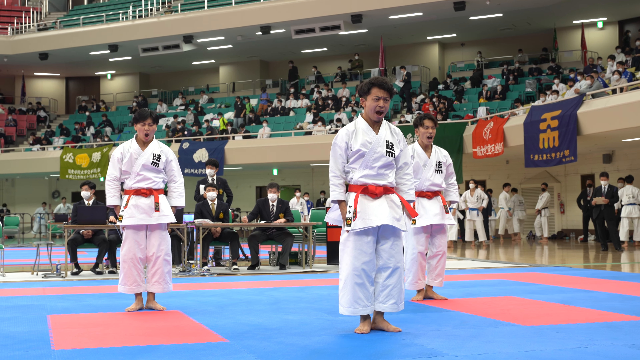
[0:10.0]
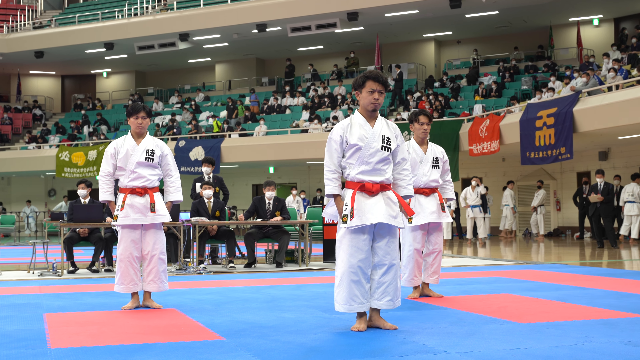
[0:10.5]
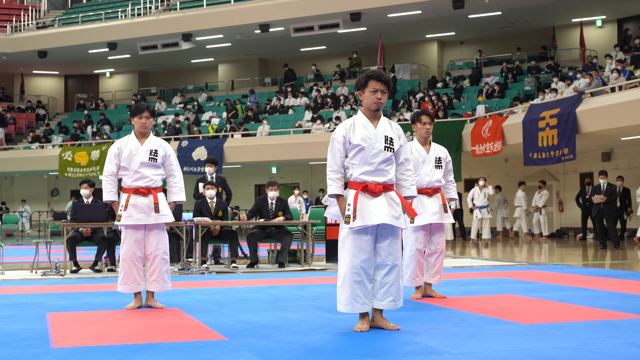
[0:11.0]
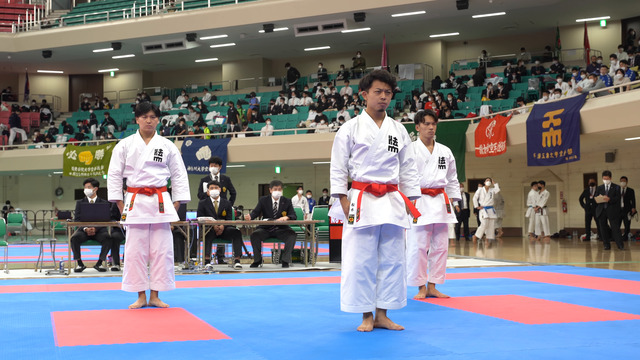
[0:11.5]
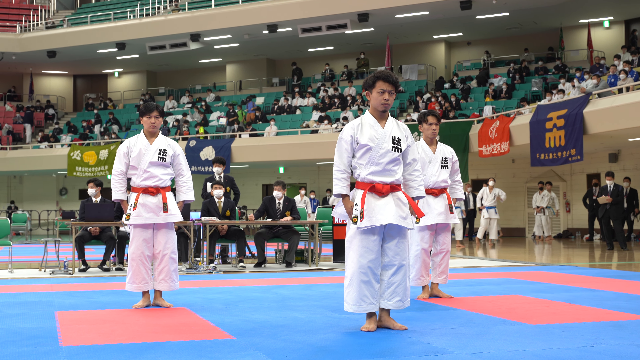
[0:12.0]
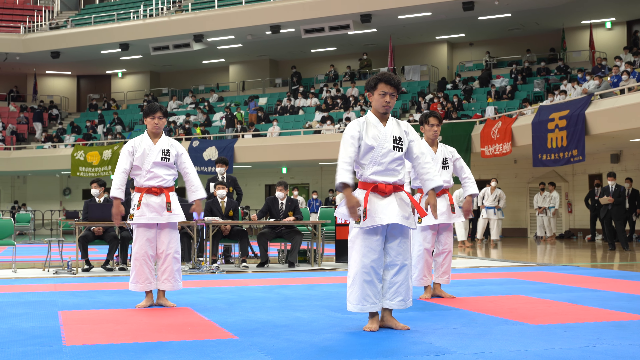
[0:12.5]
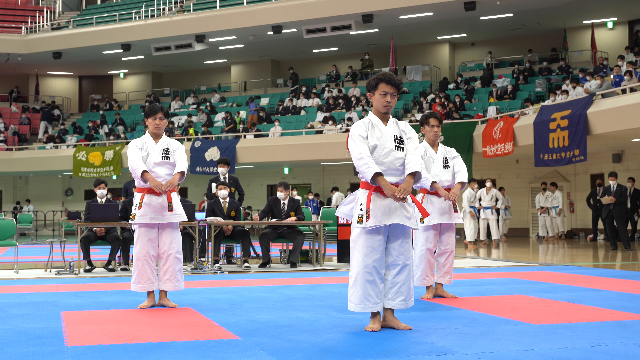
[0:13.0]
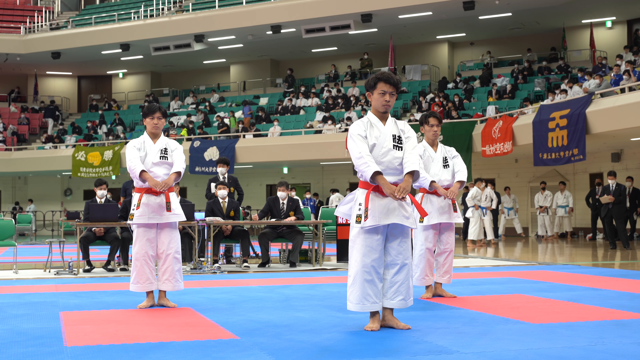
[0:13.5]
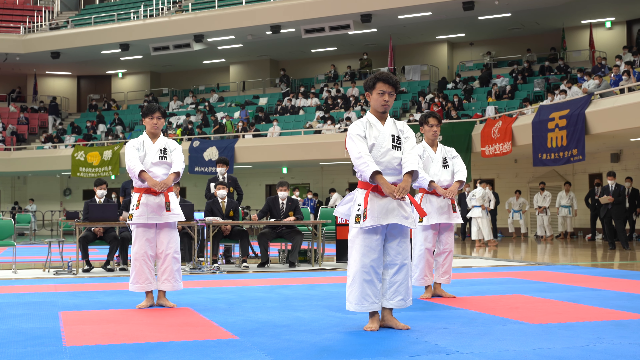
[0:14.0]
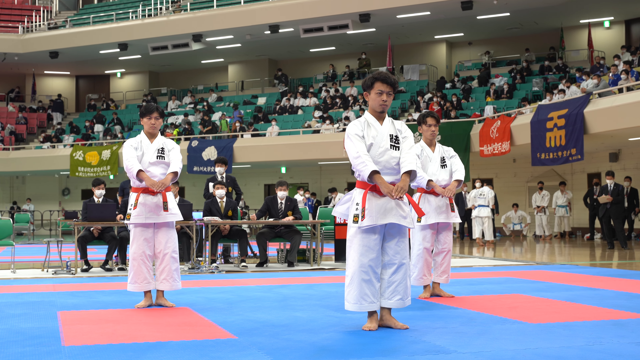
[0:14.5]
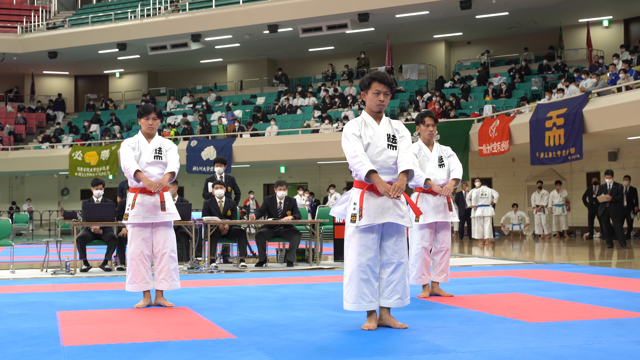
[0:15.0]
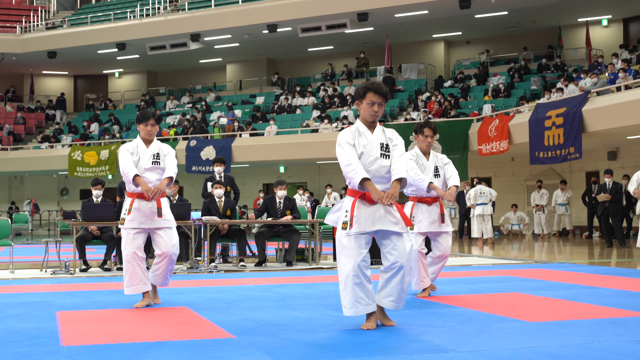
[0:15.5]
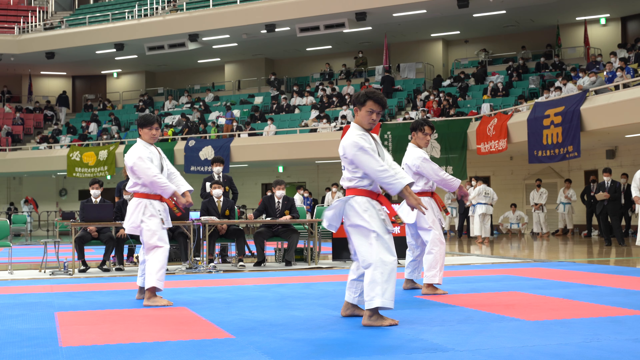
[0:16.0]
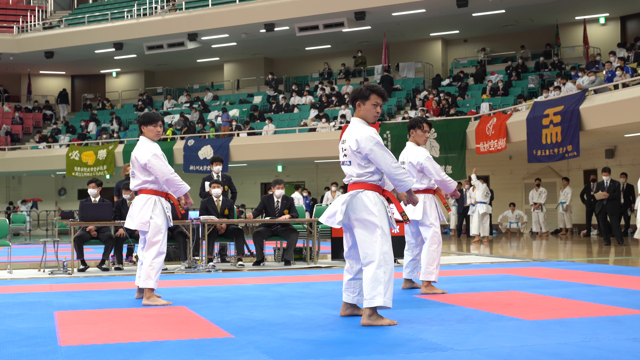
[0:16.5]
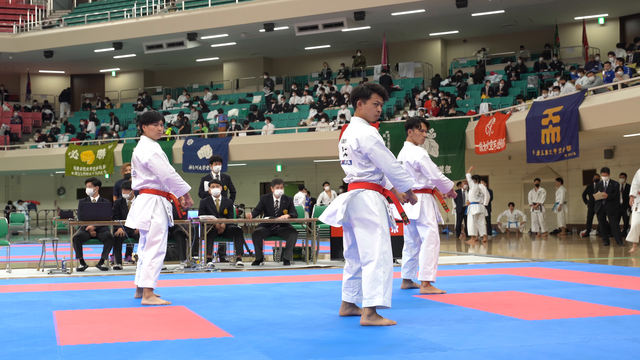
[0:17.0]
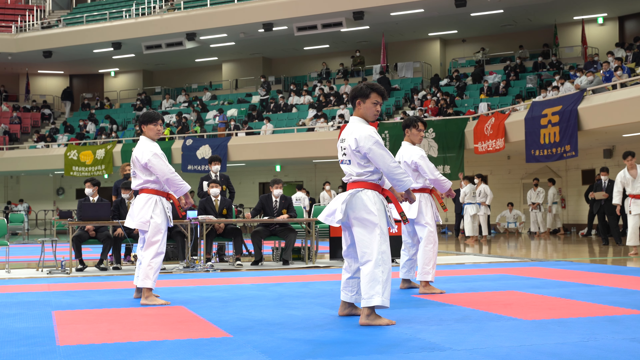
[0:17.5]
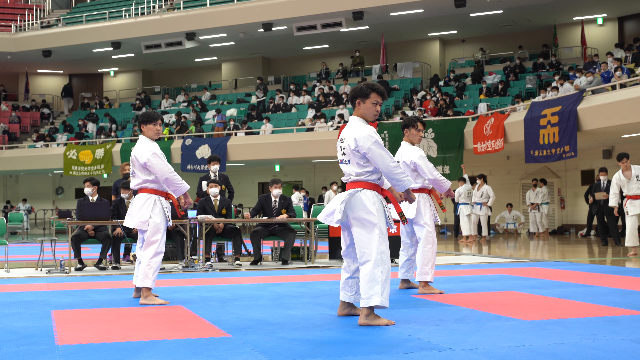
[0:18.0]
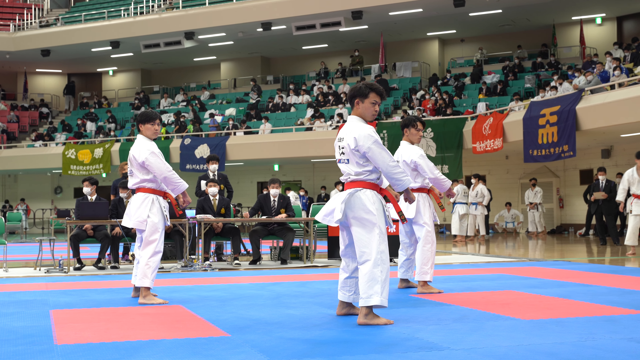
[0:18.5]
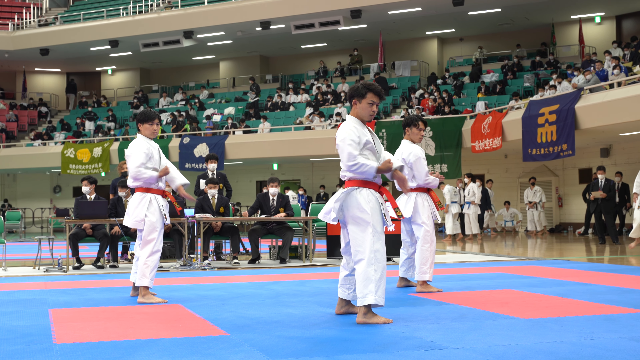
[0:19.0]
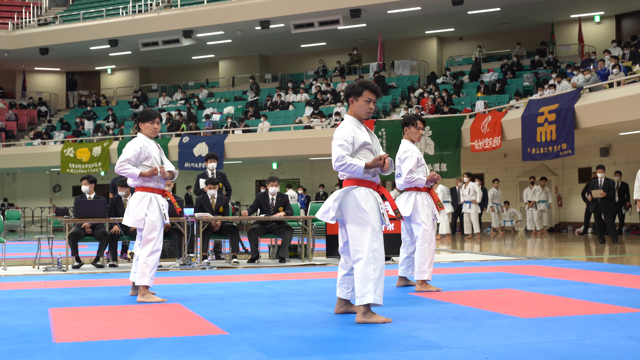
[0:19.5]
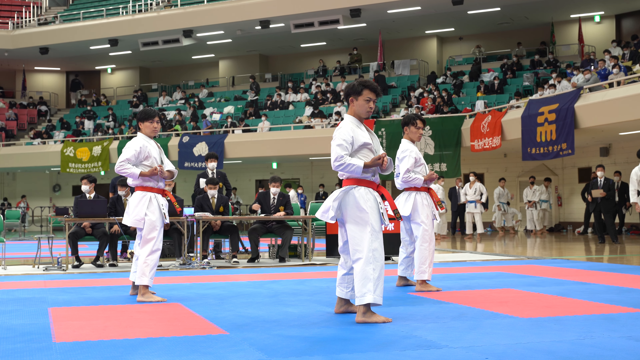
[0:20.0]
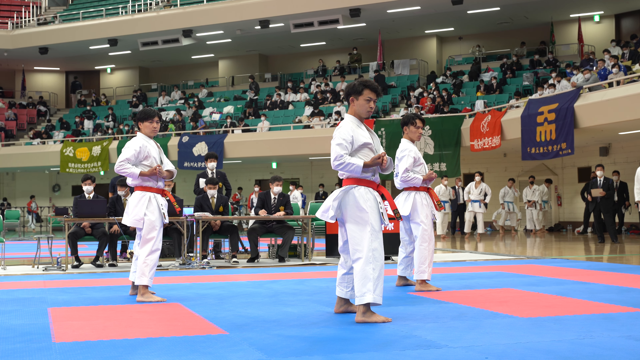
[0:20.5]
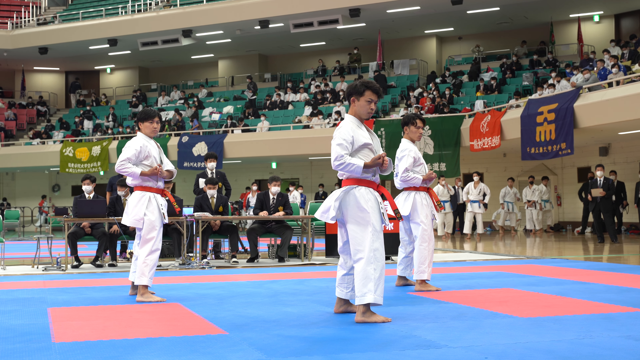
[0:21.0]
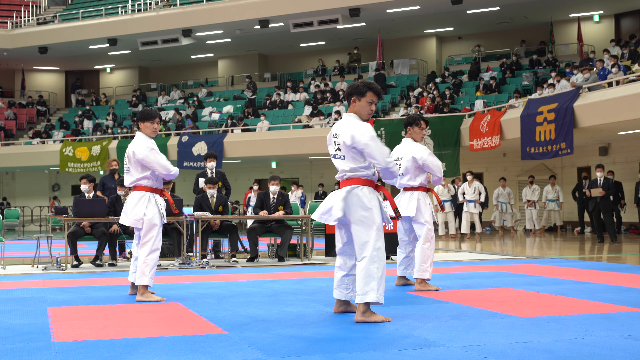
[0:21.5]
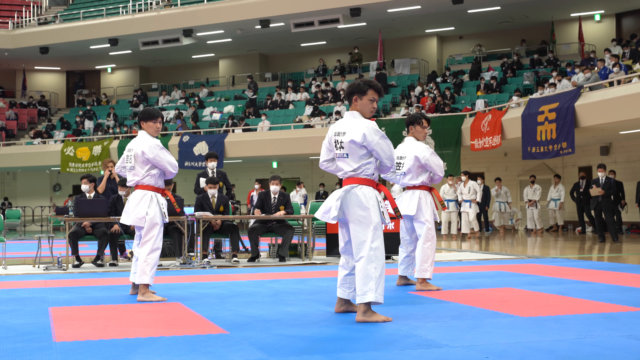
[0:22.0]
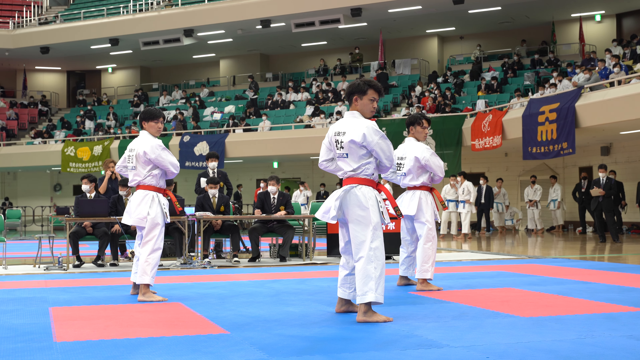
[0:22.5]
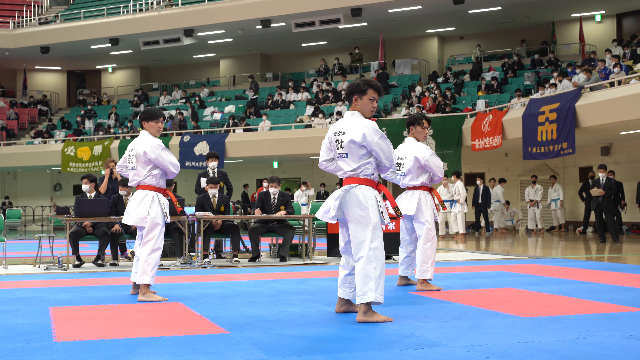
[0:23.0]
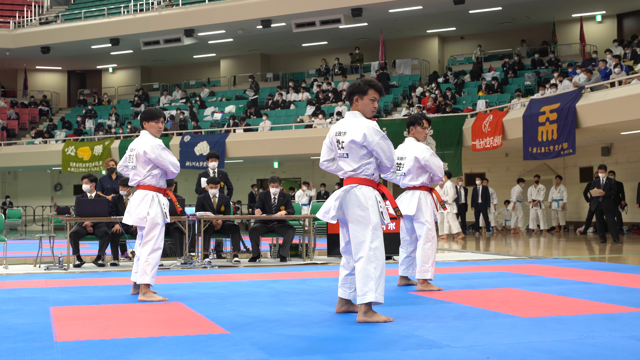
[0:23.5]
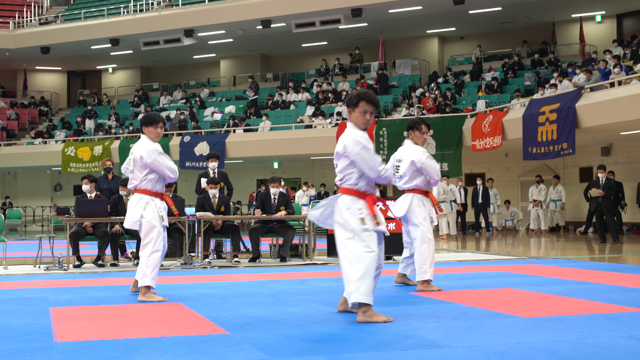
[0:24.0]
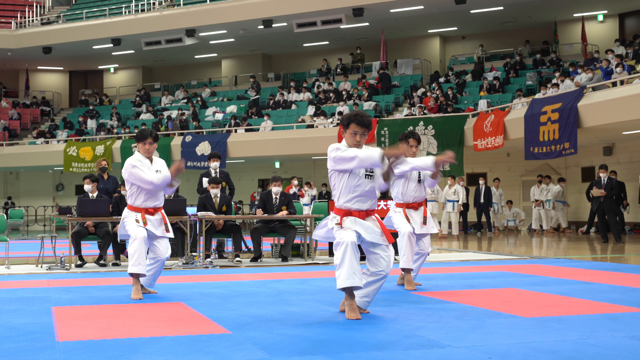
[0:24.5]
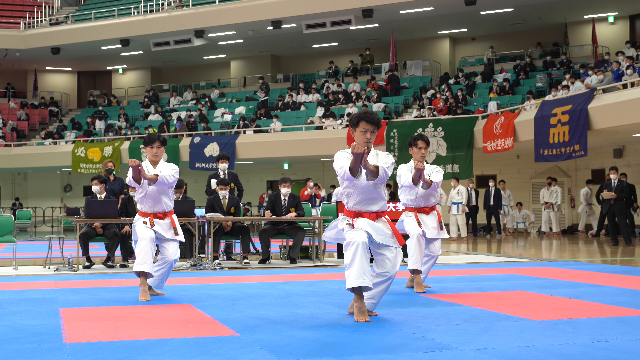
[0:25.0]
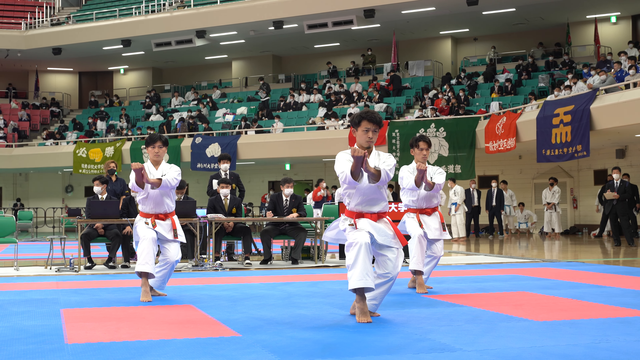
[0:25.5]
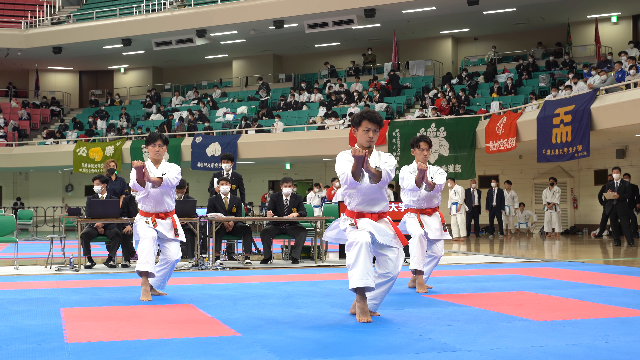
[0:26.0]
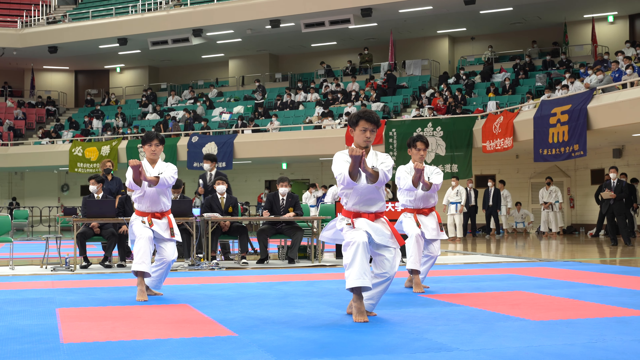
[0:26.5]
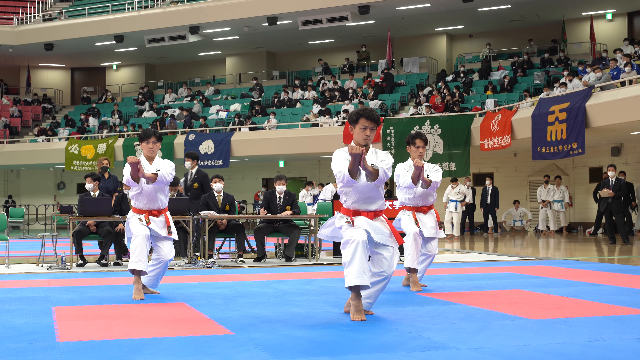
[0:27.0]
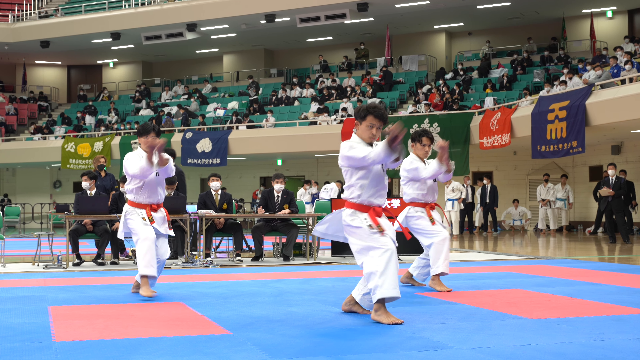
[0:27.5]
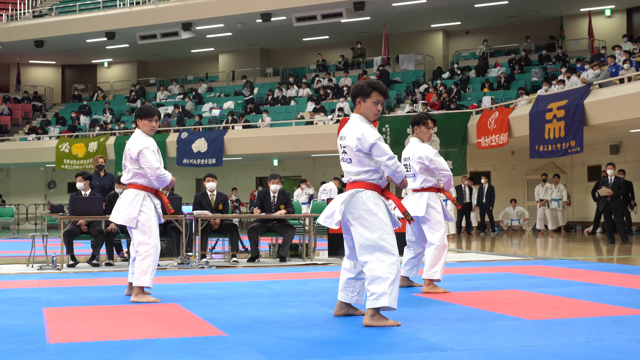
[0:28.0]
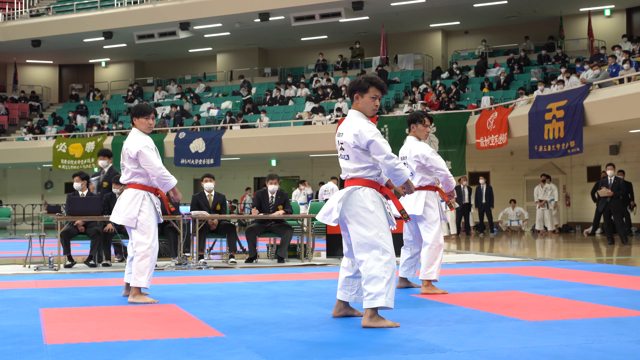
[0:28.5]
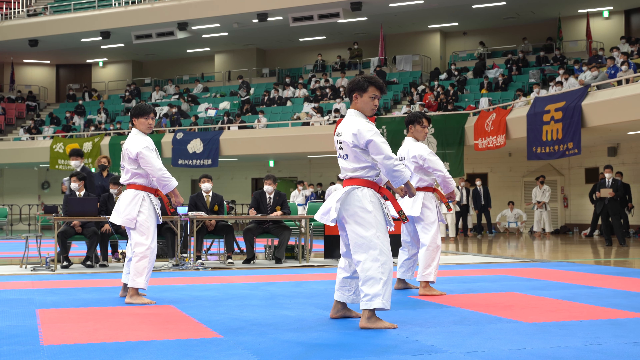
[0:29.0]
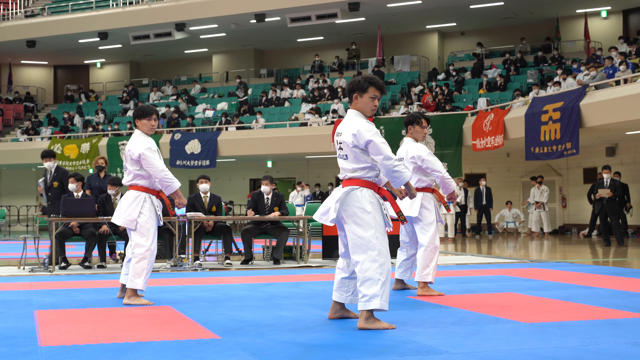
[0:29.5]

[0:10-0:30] After the bows, the three men move their arms from their sides to the front of their bodies, keeping them straight. They appear to be shouting something, and their faces are stern. In unison they do a little bounce and pivot their bodies to the left, so their feet are stacked sideways, with the right foot toward the front and the left foot toward the back of the room. They bend their arms into a fighting stance, arms toward the front on the right sides of their bodies, then slide the arms across their fronts to their left. They pivot forward and lean back into their left legs while straightening their arms with fists upward. In a fluid movement, they stand upright and pivot to the left once again, as if coming out of the fighter position. It looks like a demonstration.